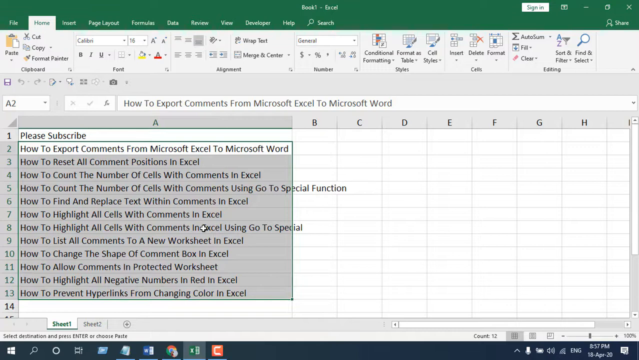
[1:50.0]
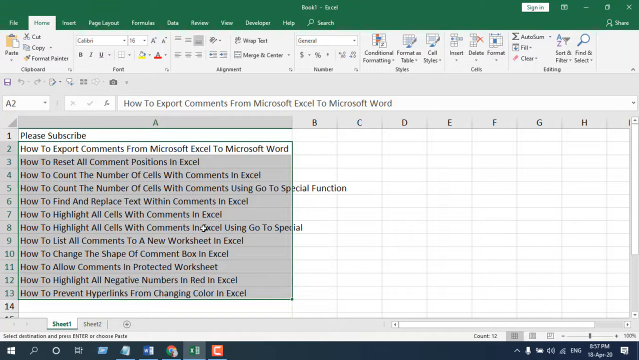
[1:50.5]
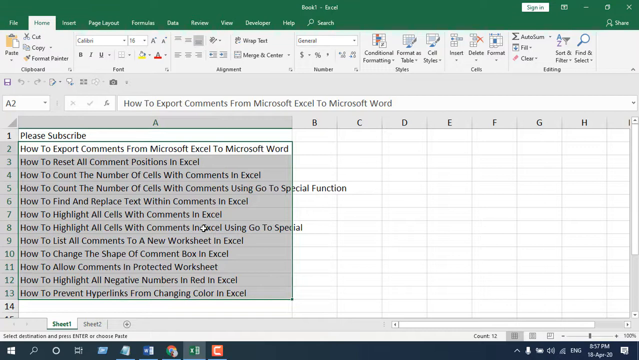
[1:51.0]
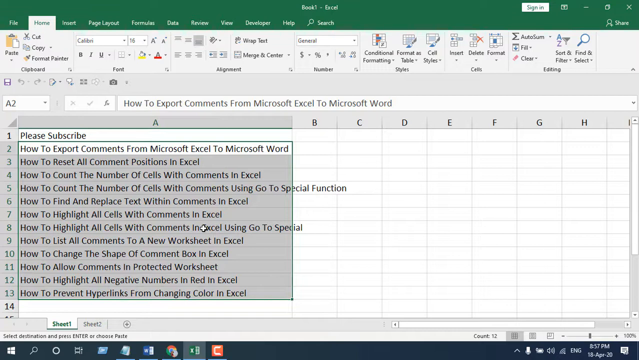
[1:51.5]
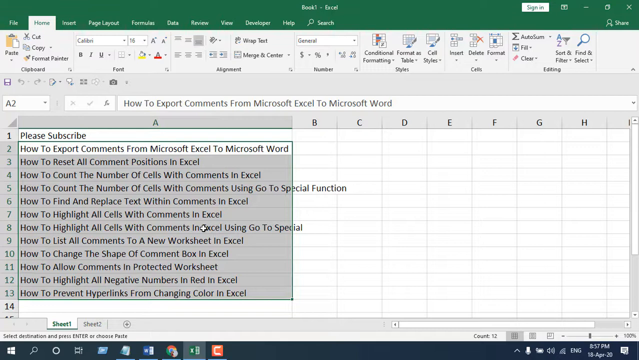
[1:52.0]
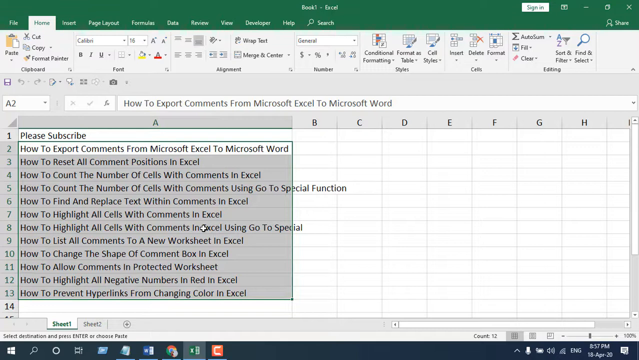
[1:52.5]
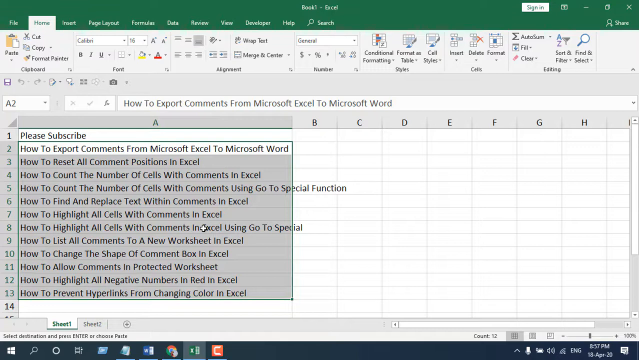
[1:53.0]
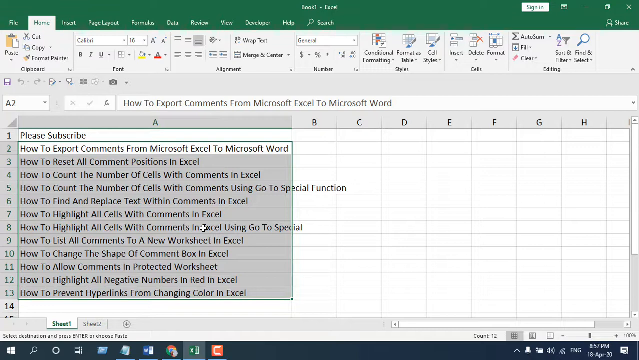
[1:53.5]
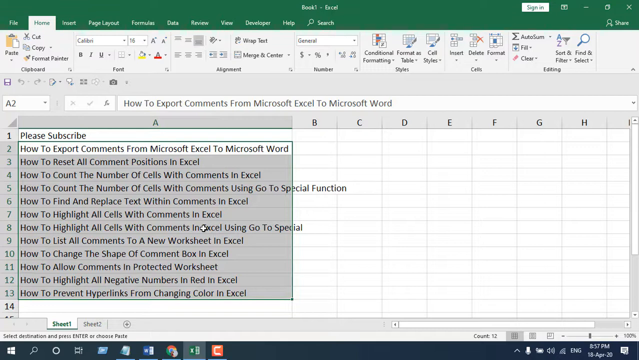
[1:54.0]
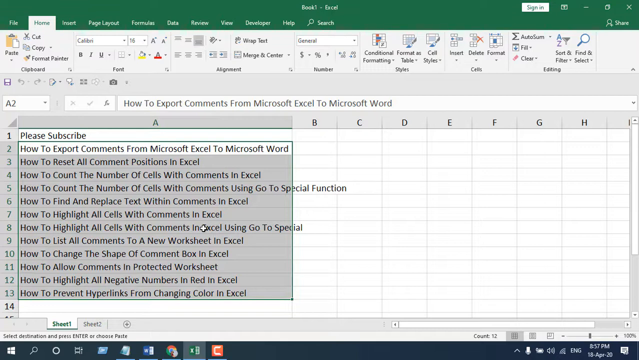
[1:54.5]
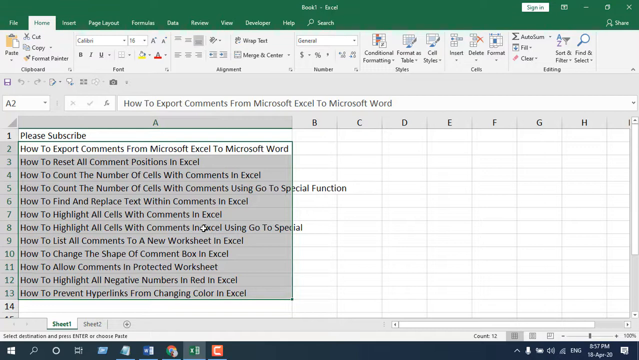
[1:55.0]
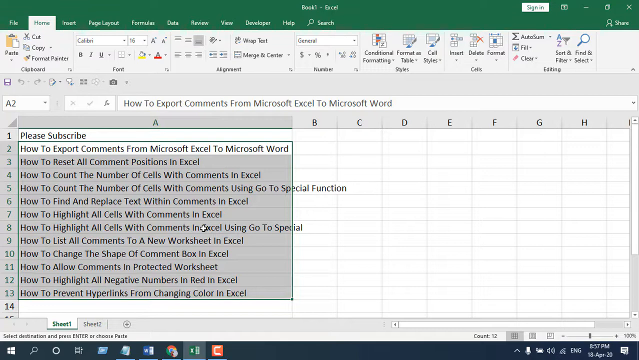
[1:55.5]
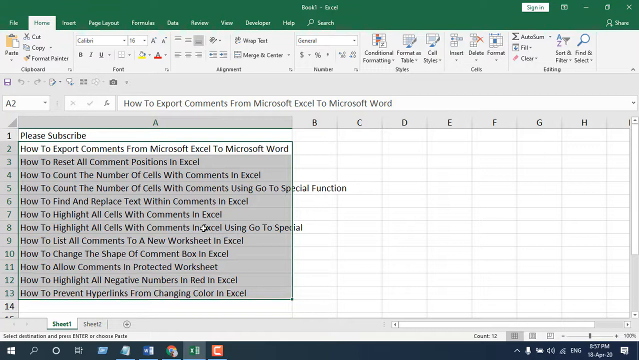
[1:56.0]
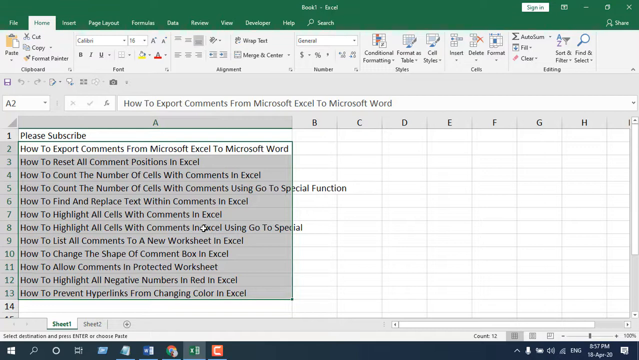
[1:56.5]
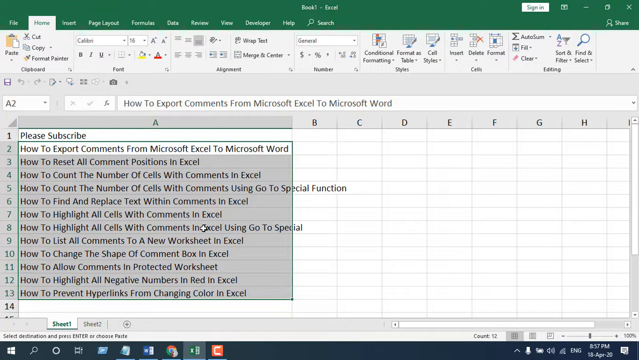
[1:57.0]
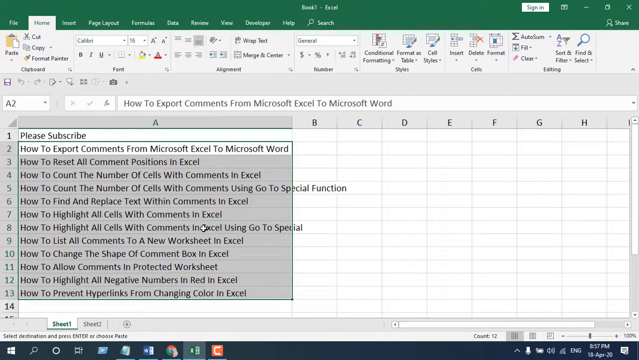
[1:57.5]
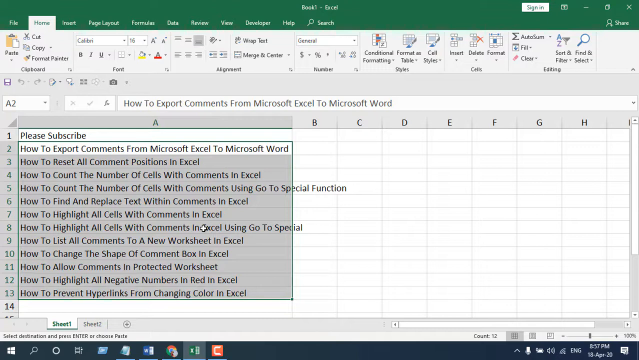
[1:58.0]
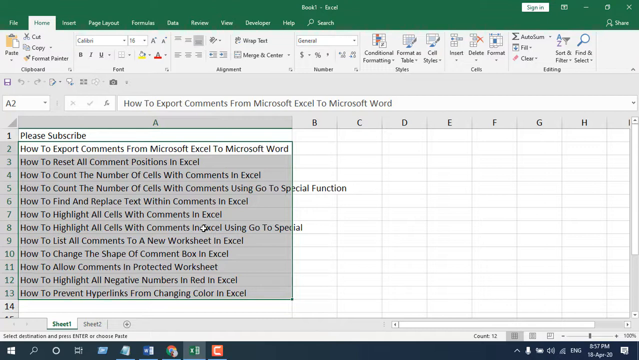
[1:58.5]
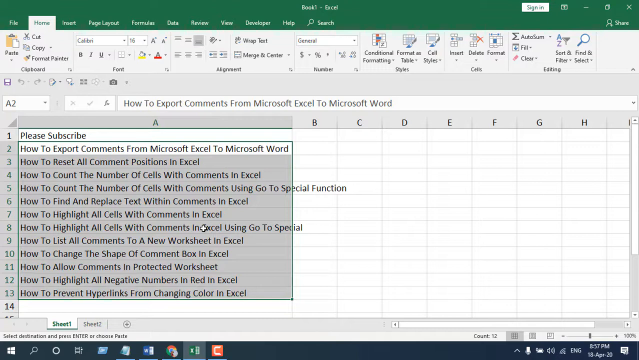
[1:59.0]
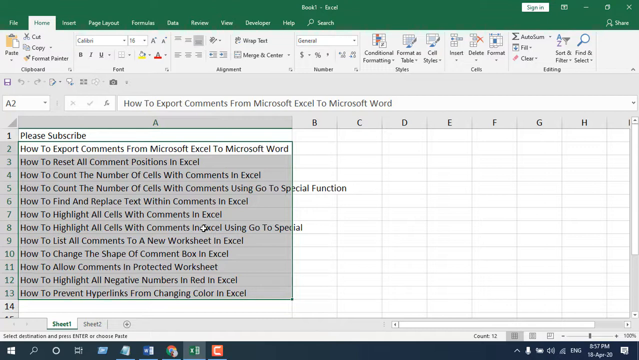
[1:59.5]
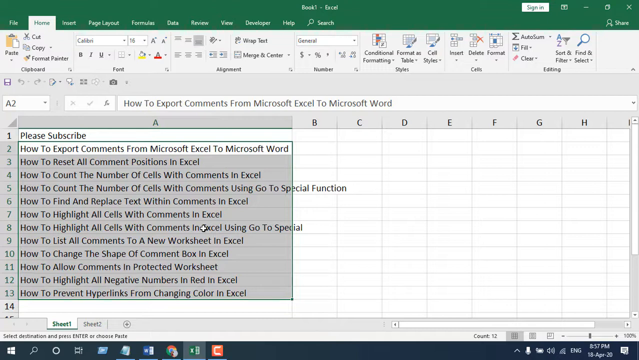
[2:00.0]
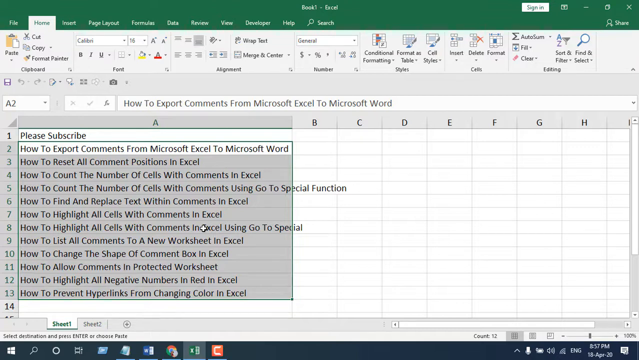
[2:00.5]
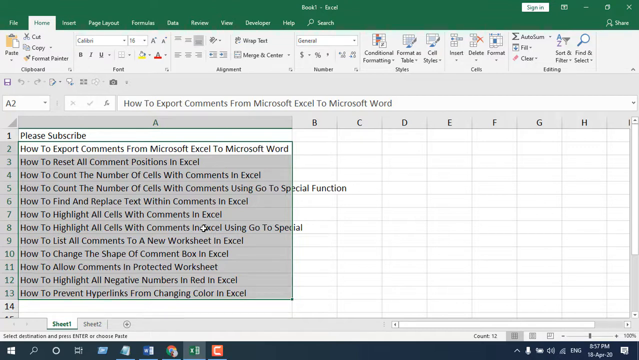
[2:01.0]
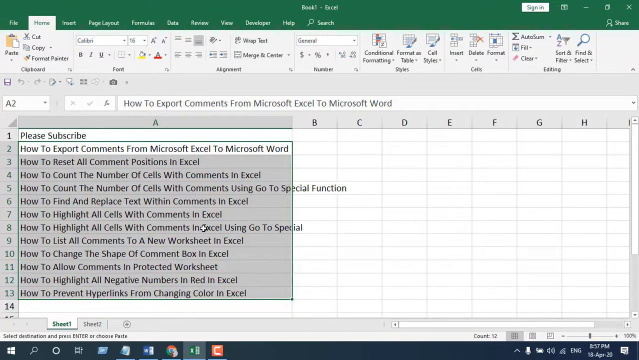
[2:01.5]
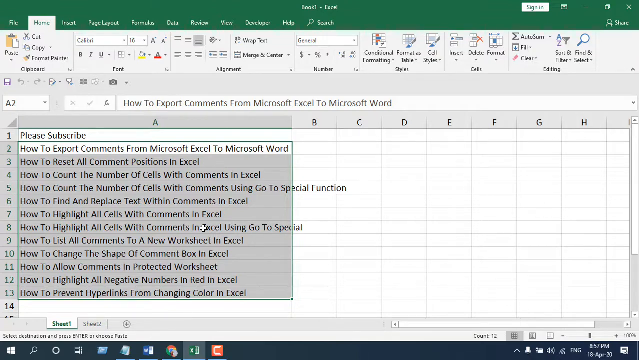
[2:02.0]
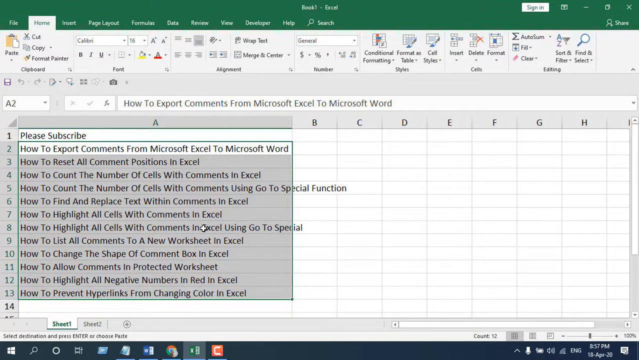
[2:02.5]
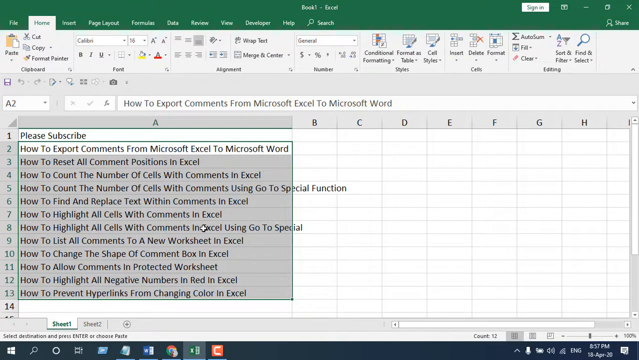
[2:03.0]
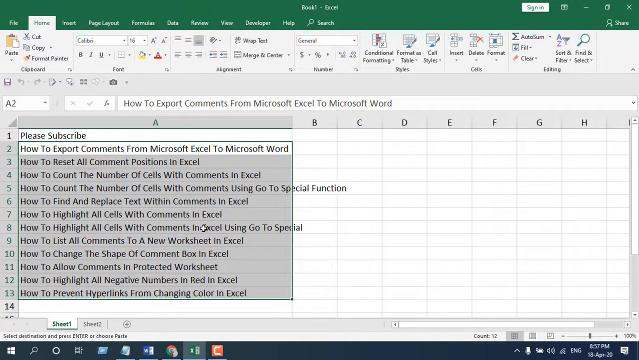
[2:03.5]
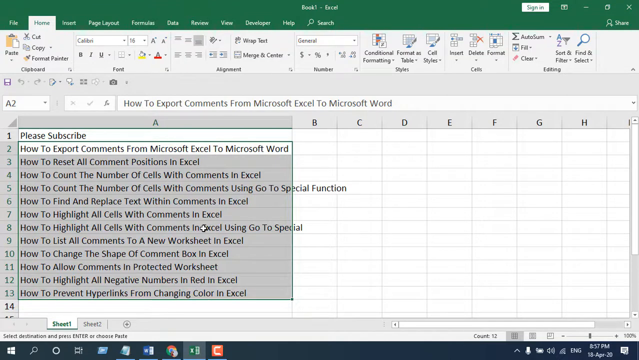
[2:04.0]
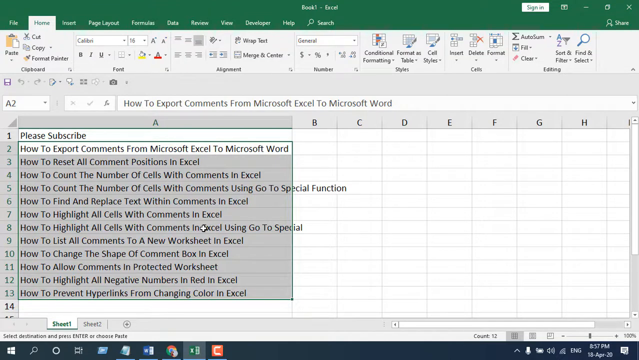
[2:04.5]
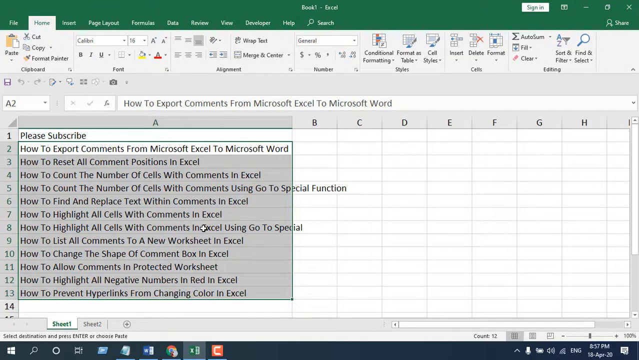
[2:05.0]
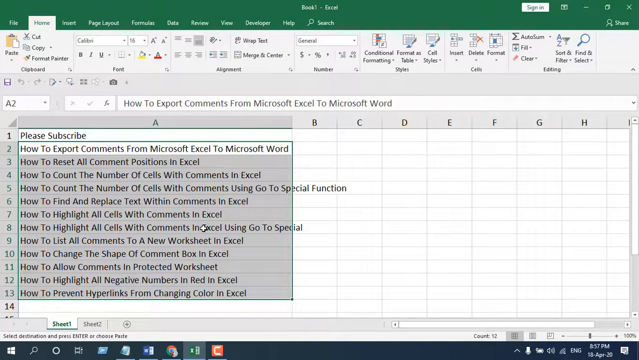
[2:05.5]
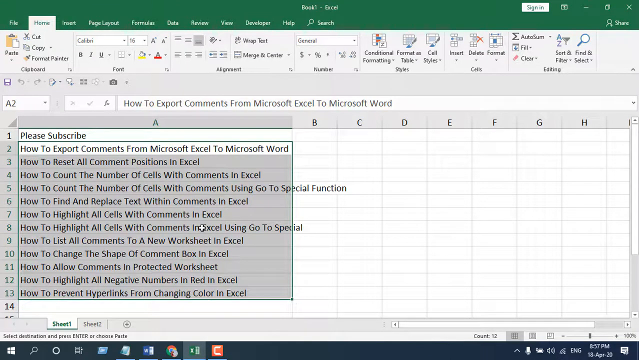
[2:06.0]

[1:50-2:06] The selected cell's content appears in the text field at the top, to the right of the function box, reading "how to export comments from Microsoft Excel to Microsoft Word". In the ribbon, below the font name and size, is an icon that looks like a graduation cap with a yellow line under it, apparently the fill color, possibly paint pouring out. To its right is an "A" with a red line beneath it for font color. Further along are alignment options, wrap text, and a few other options, followed by conditional formatting, format as table and styles, which have drop-downs with emojis above them.